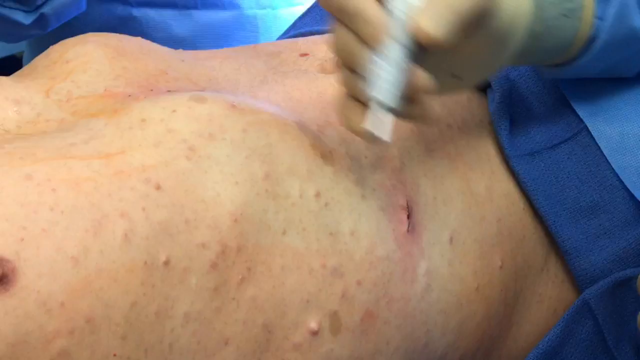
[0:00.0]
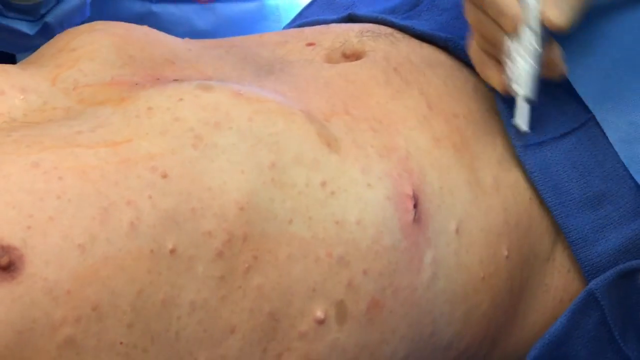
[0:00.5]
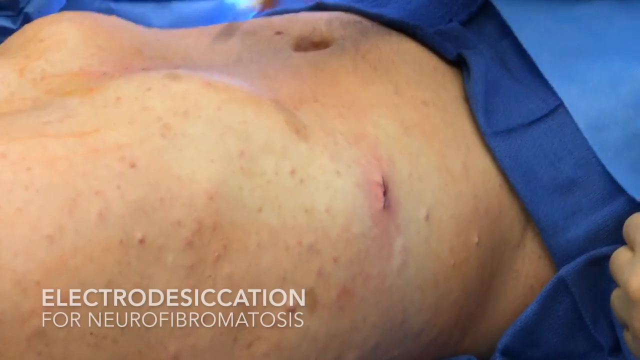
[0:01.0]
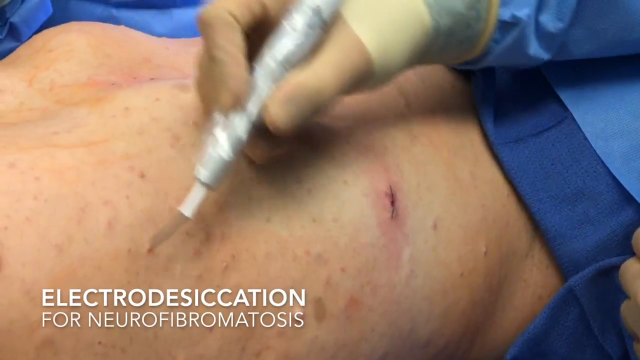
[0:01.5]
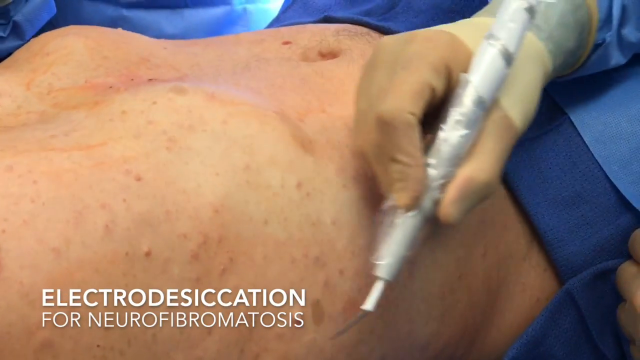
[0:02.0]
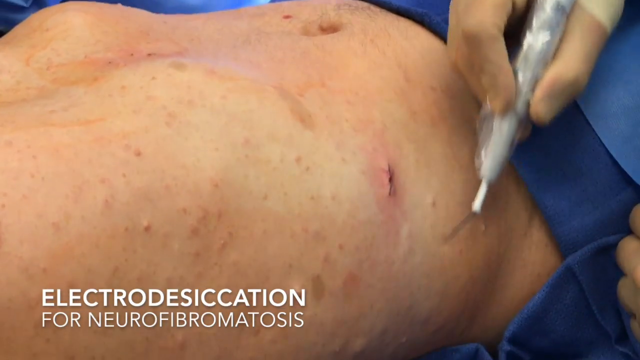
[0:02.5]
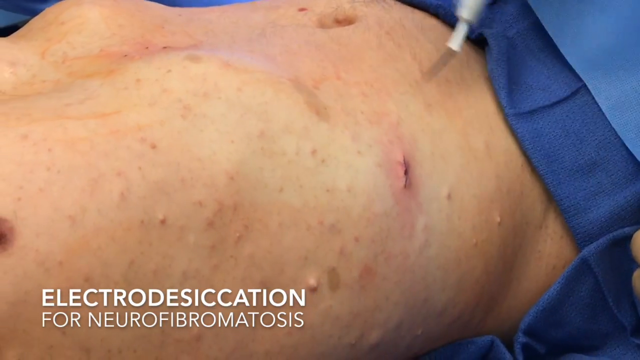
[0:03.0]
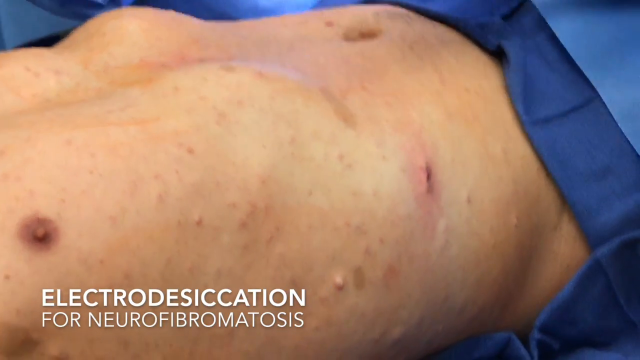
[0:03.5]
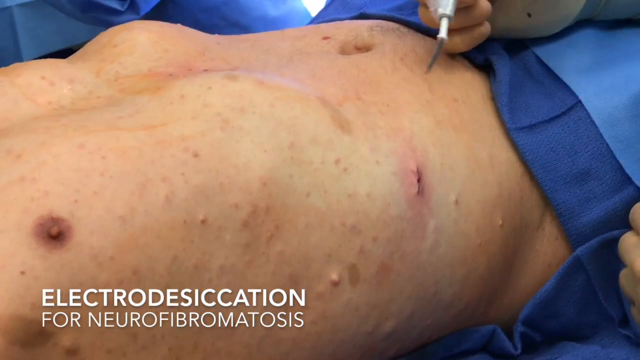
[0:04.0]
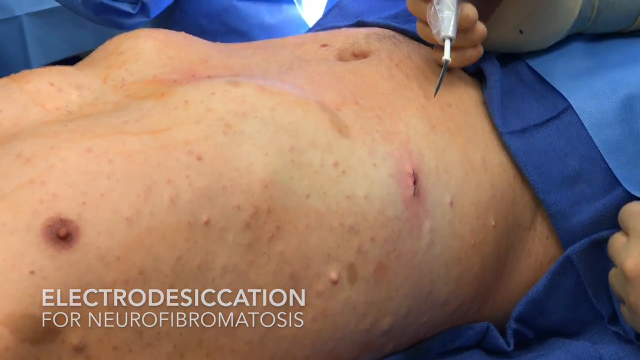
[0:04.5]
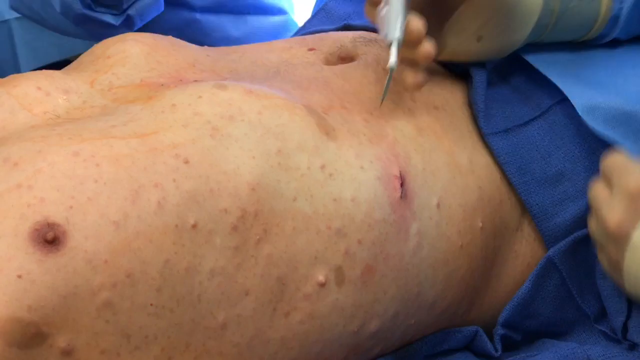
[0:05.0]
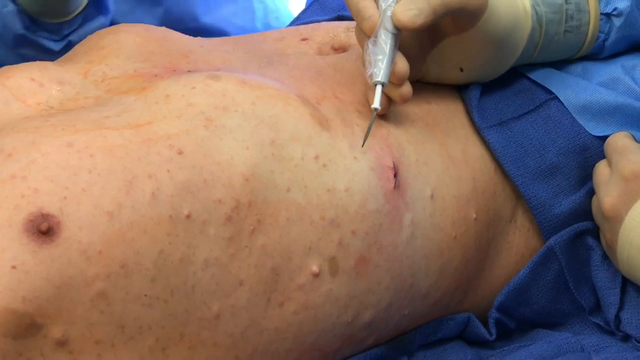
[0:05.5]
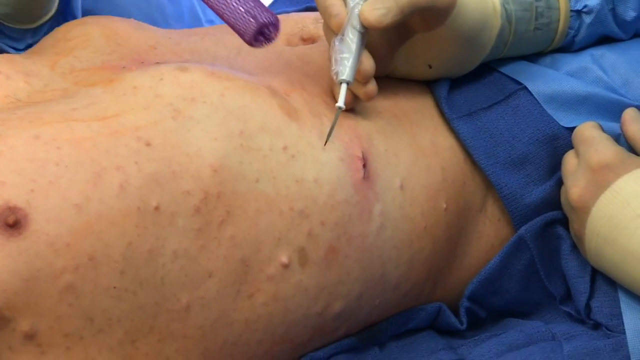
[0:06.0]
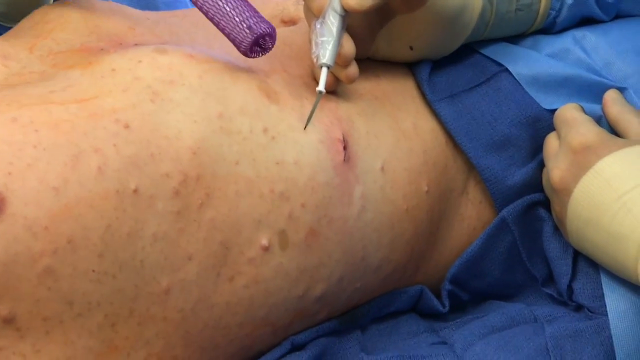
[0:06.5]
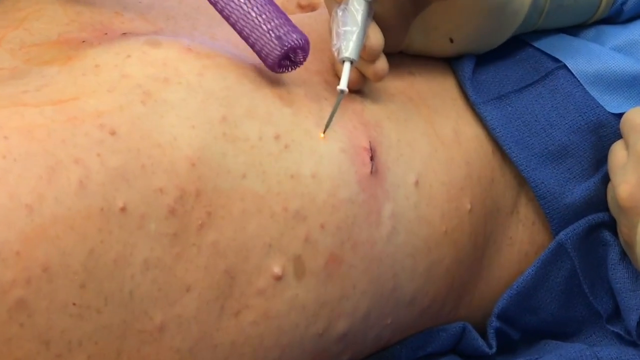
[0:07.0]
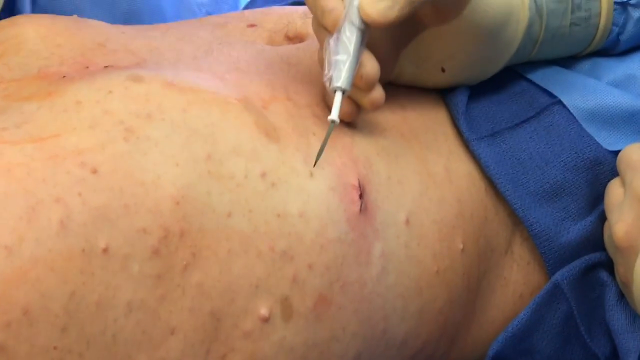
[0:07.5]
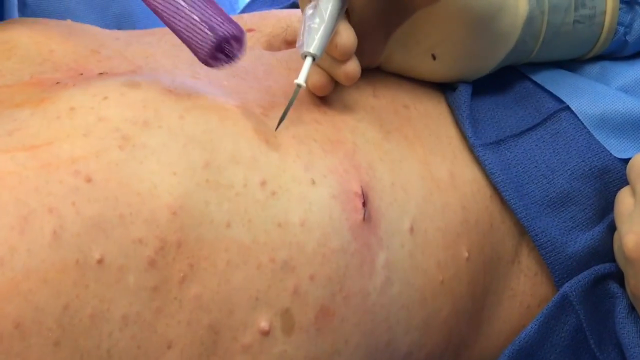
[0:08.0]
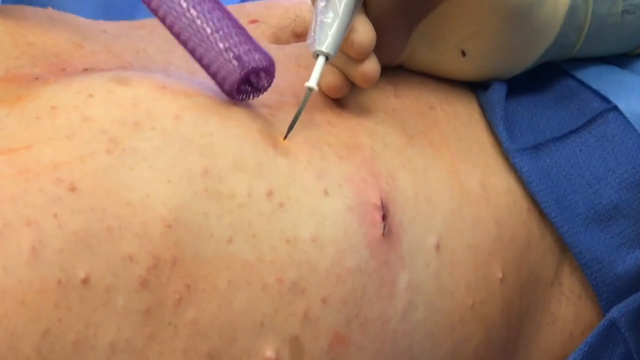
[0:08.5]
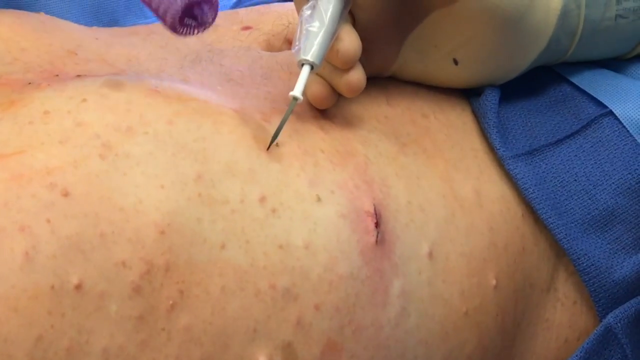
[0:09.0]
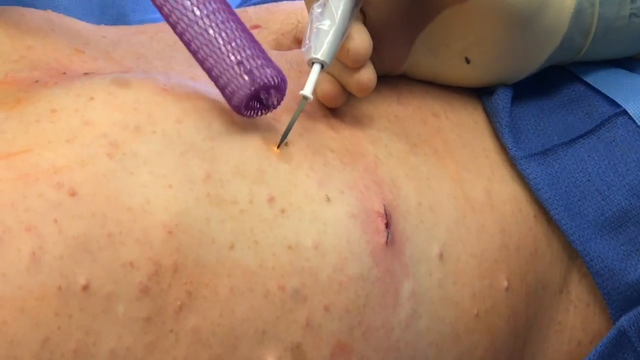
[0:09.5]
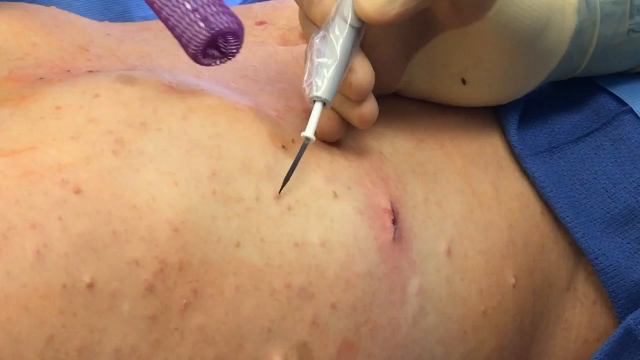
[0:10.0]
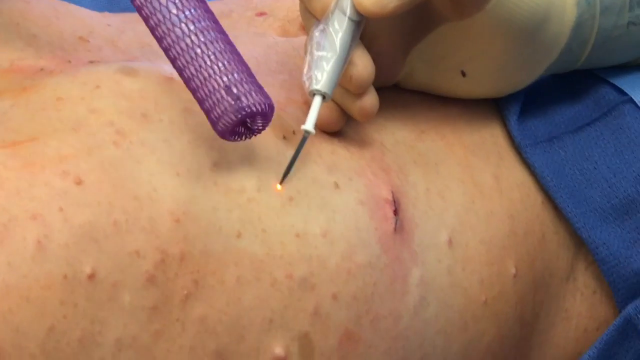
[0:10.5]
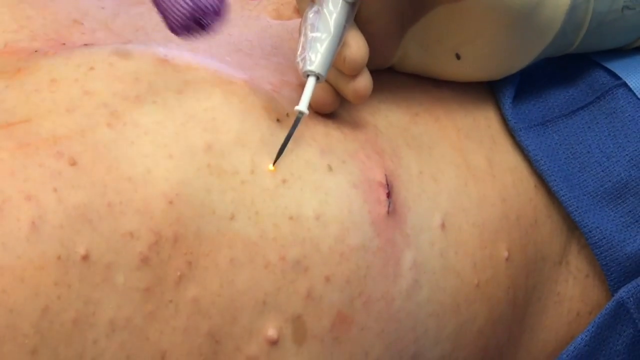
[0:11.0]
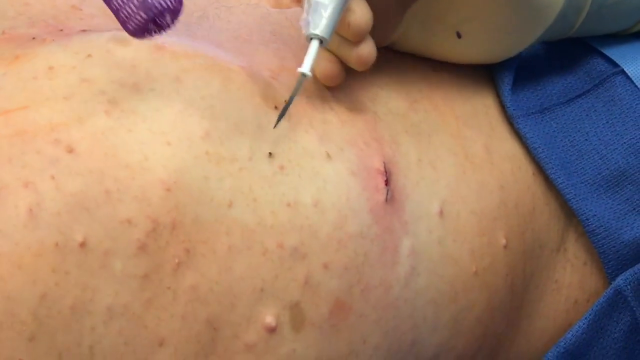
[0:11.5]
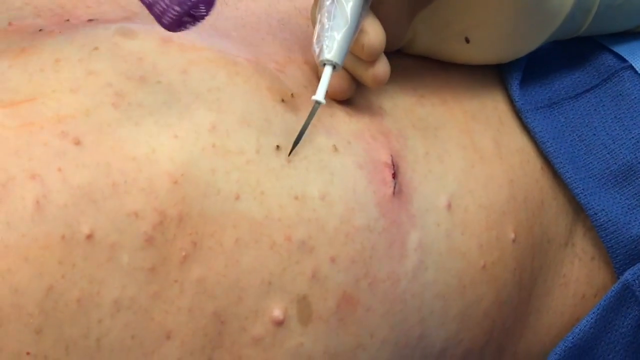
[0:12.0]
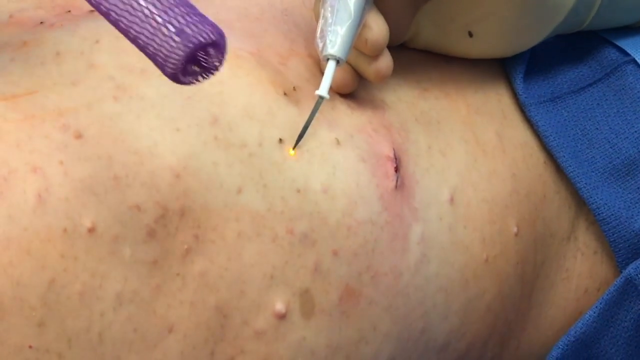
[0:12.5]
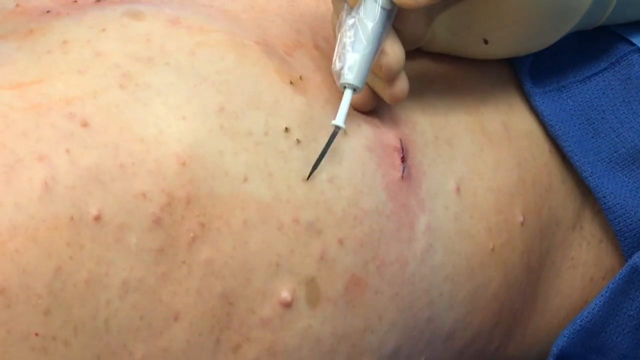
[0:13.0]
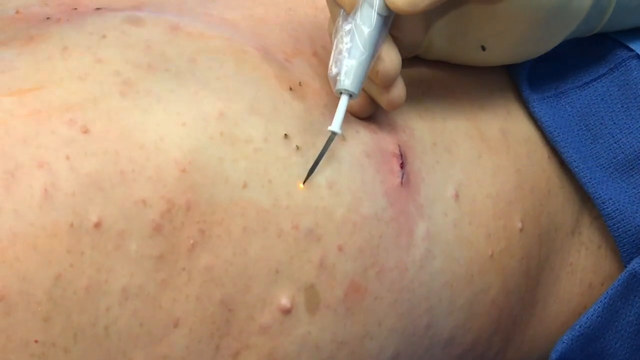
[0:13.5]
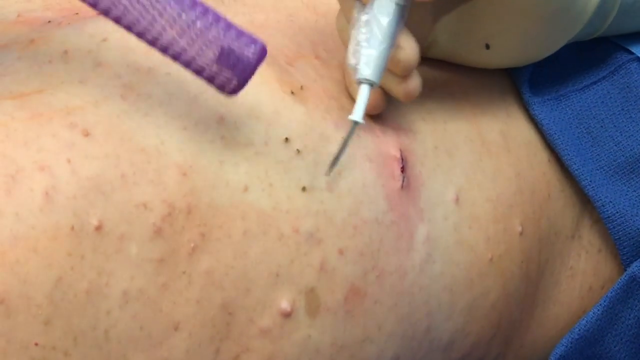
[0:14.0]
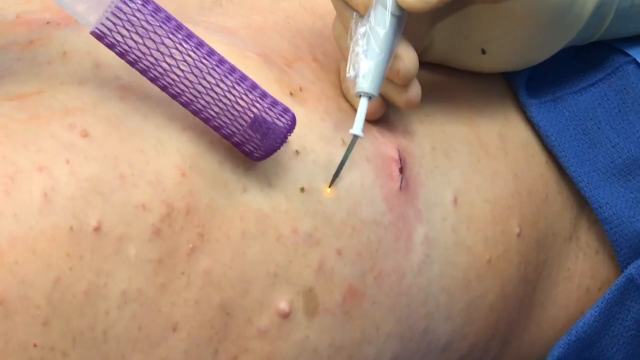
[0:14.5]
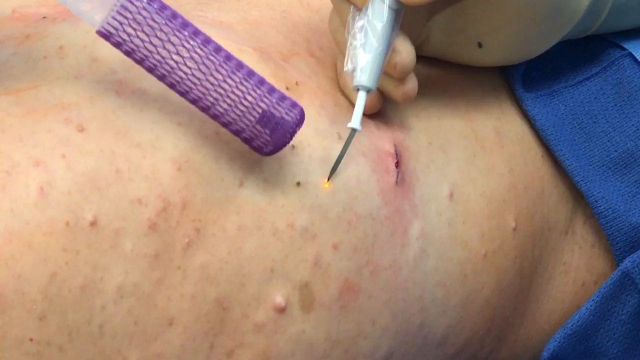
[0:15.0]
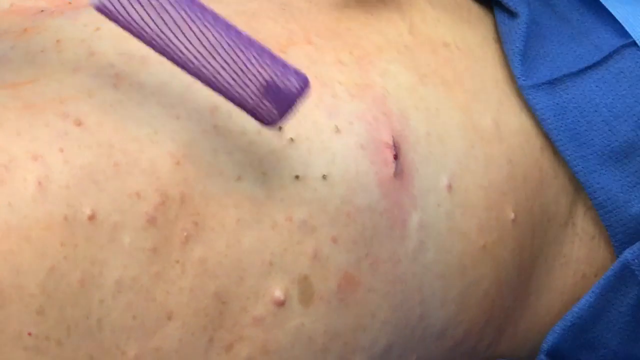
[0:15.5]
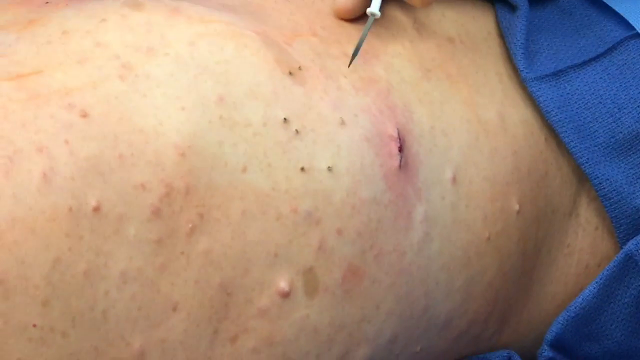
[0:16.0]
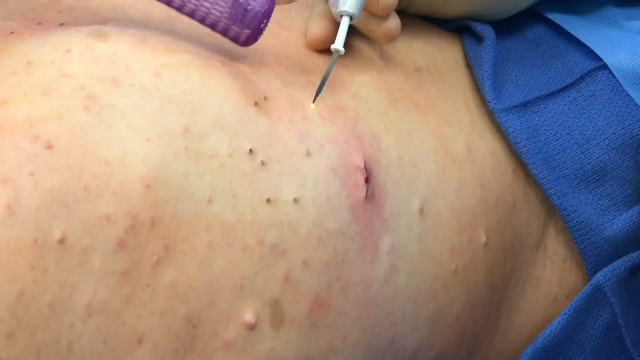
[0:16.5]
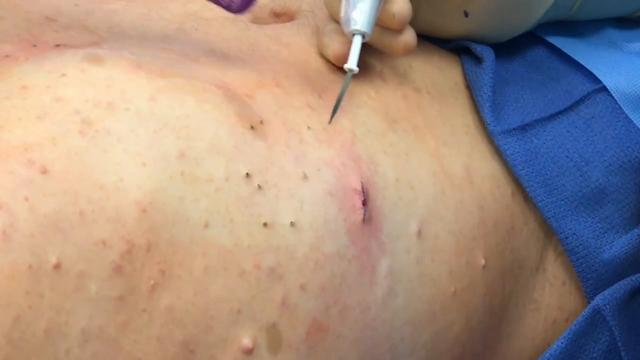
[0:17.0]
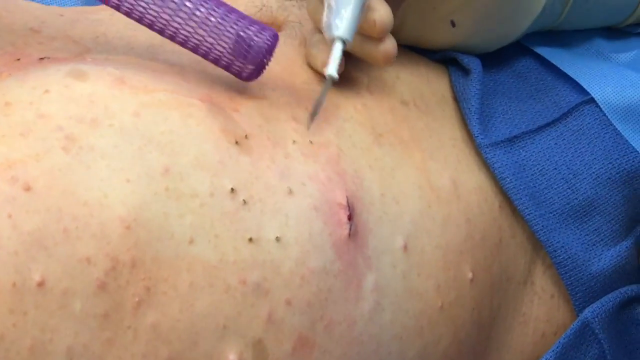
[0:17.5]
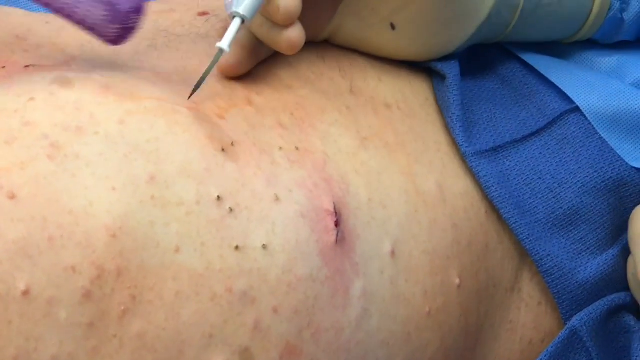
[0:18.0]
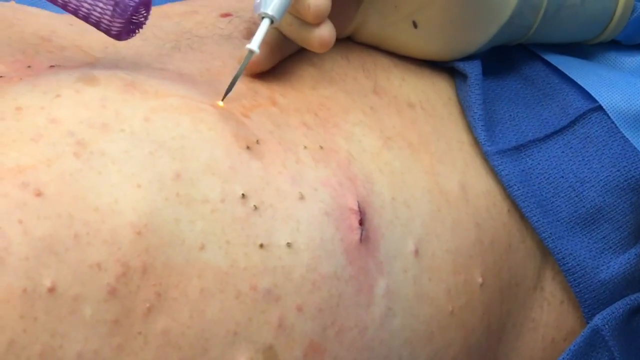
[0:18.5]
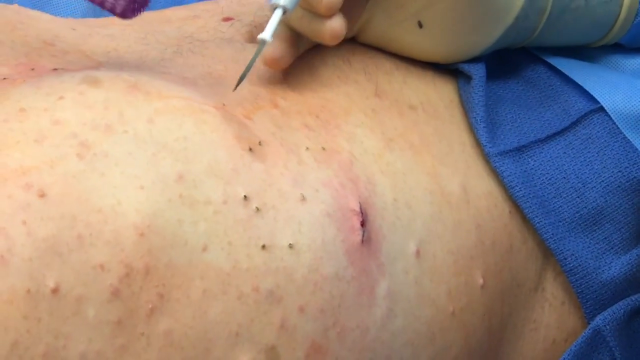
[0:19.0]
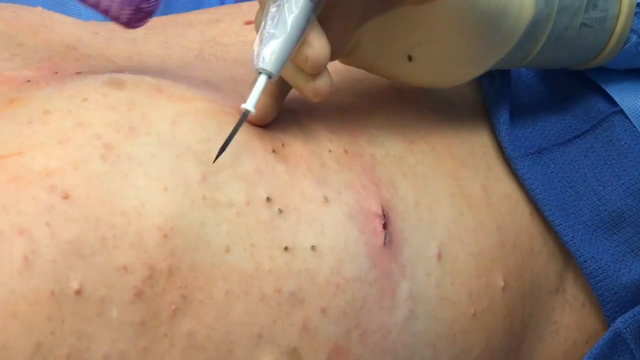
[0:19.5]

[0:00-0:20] A doctor performs a minor surgery removing neurofibromas from a Caucasian male patient, working on the patient's right side, the lower right chest and upper right abdomen. The procedure is electrodesiccation for neurofibromatosis. The doctor circles the area with a tool wrapped in clear plastic. It has a plug-in end with a white plastic base and a long, silver, needle-like tip that burns the individual neurofibromas and leaves tiny black spots where each one was; the spots somewhat resemble blackhead pimples. The surgeon uses his right hand, which is in a white latex glove. An assistant to his left uses a type of surgical vacuum covered in purple mesh to remove dead skin cells as they make their way around the patient's lower right chest and upper right abdomen. The patient is covered with blue surgical blankets across the face and the lower half of the body.